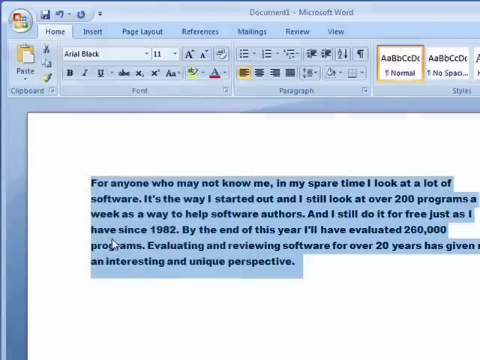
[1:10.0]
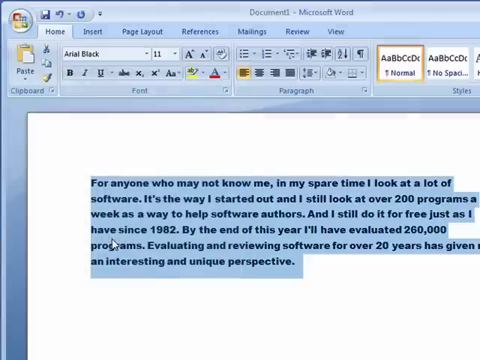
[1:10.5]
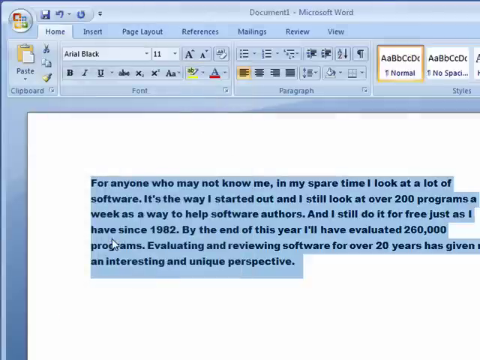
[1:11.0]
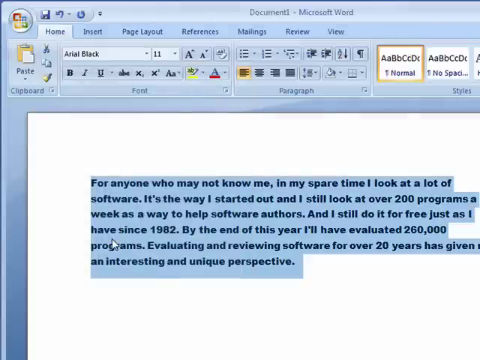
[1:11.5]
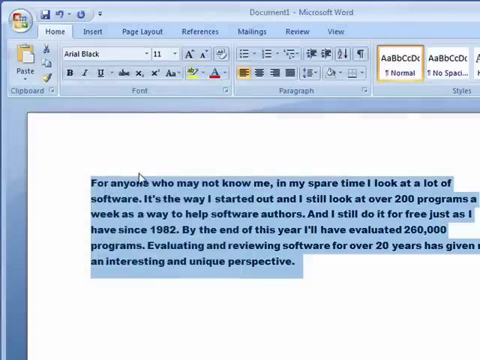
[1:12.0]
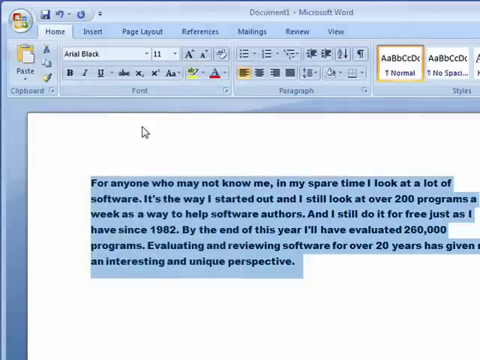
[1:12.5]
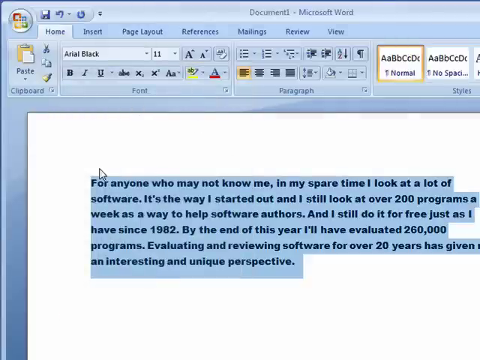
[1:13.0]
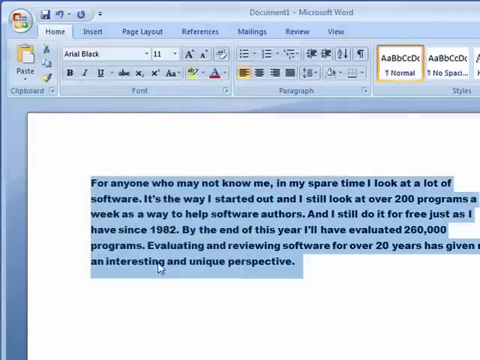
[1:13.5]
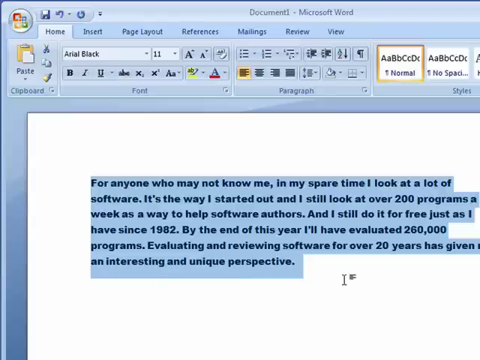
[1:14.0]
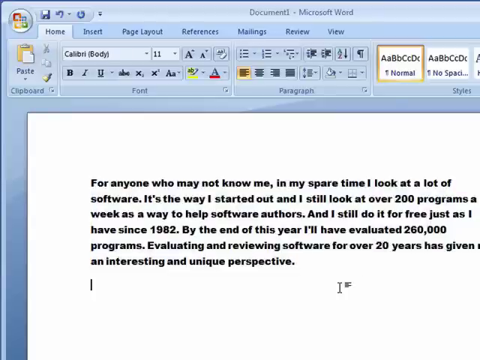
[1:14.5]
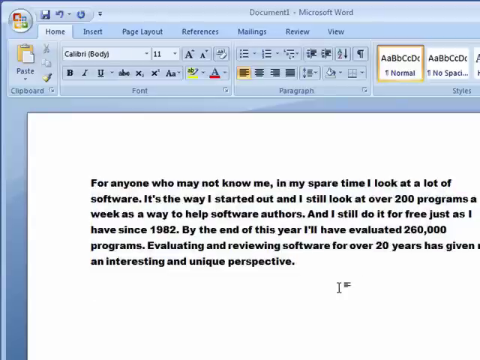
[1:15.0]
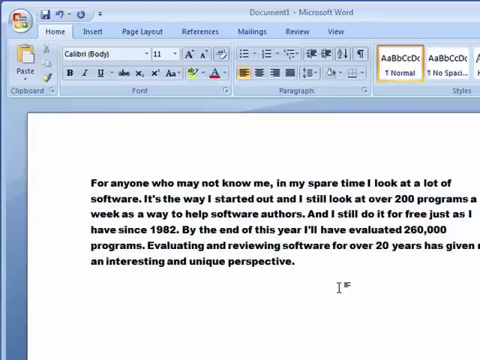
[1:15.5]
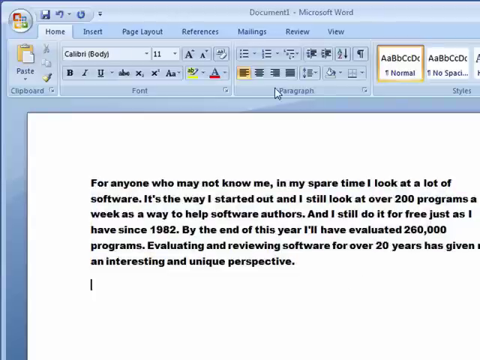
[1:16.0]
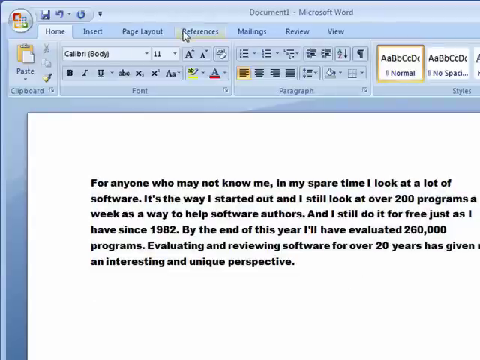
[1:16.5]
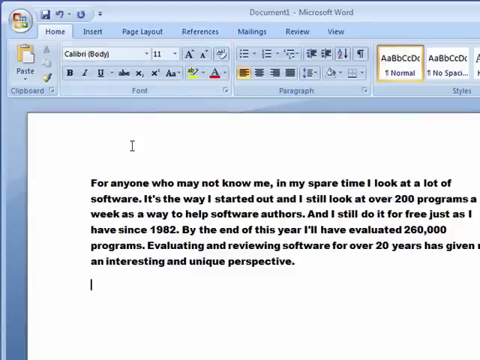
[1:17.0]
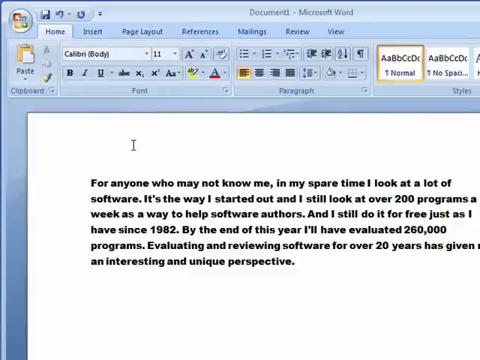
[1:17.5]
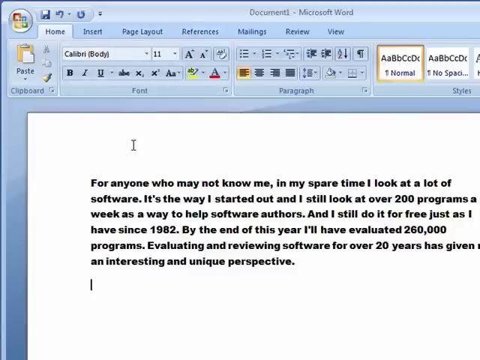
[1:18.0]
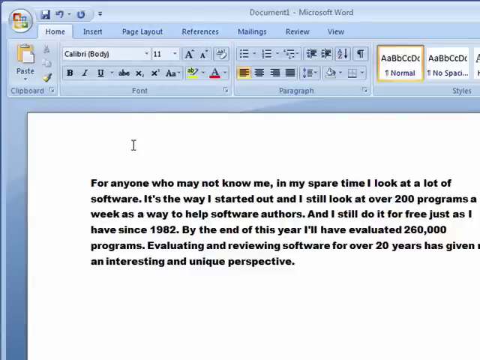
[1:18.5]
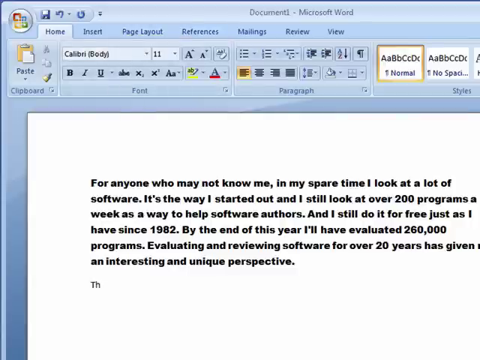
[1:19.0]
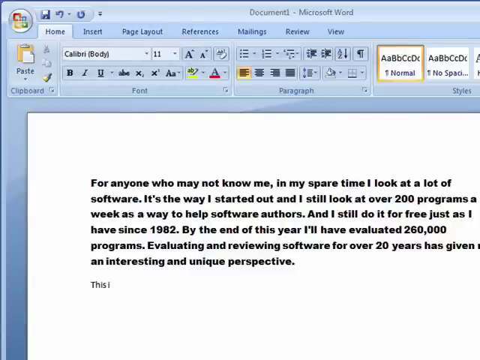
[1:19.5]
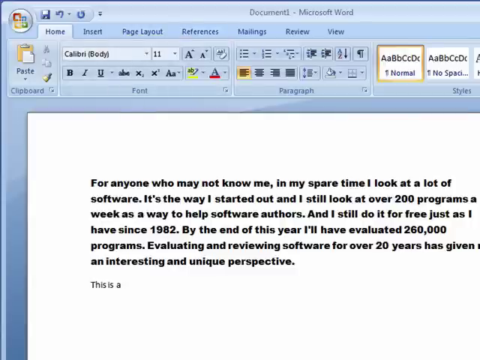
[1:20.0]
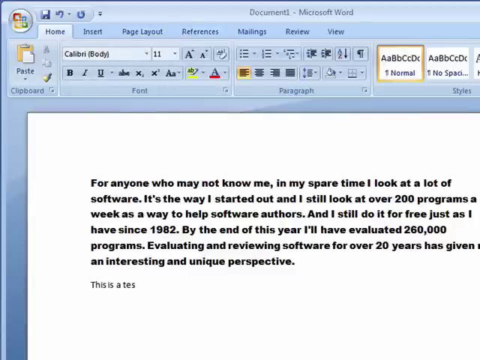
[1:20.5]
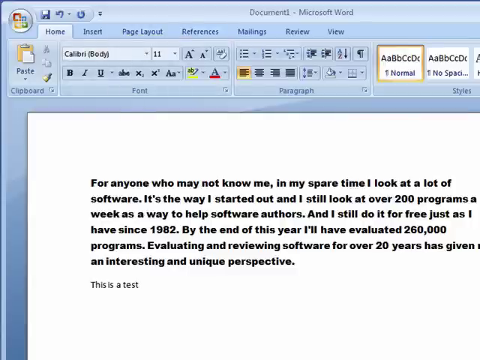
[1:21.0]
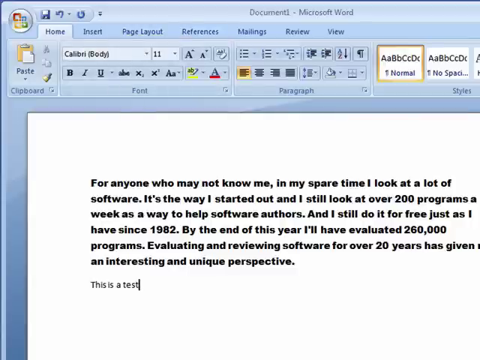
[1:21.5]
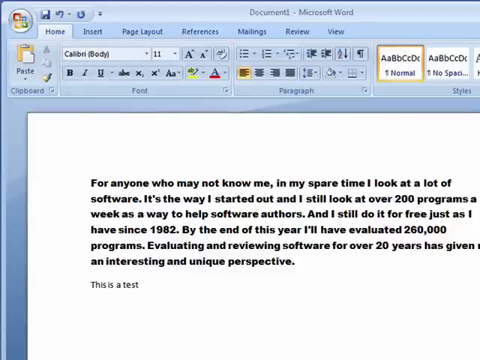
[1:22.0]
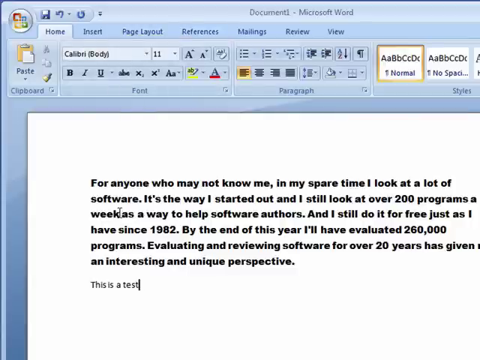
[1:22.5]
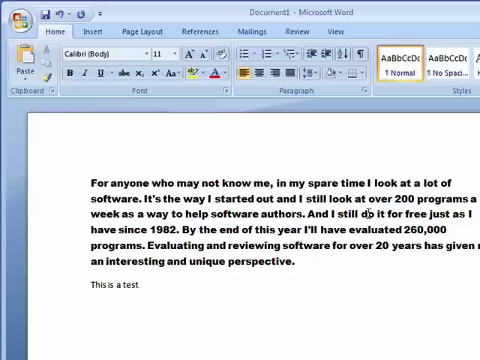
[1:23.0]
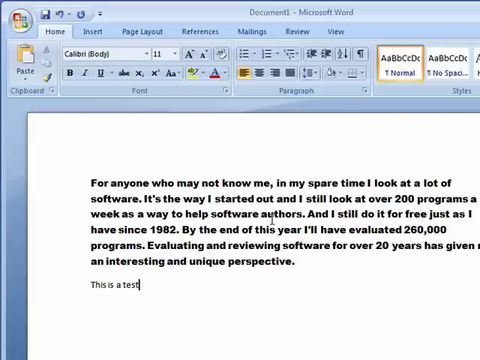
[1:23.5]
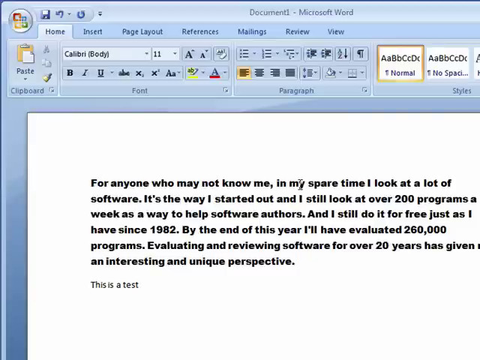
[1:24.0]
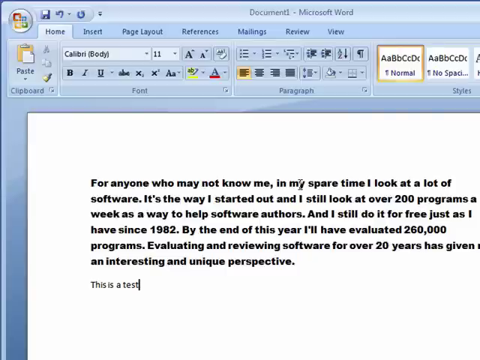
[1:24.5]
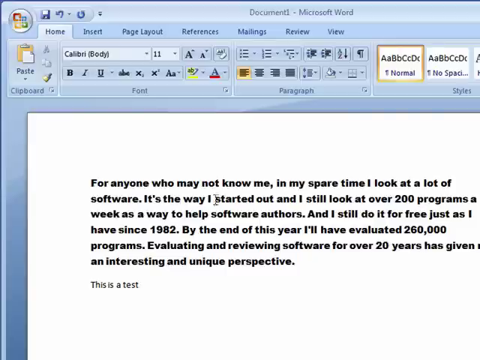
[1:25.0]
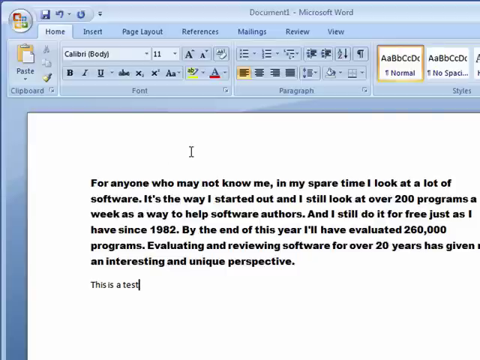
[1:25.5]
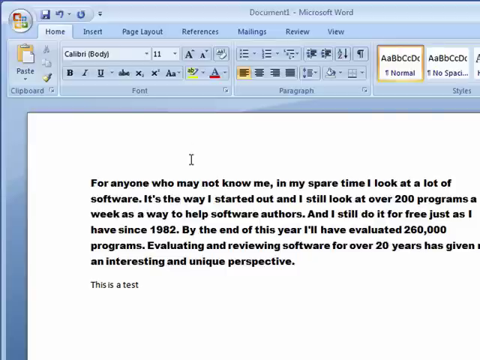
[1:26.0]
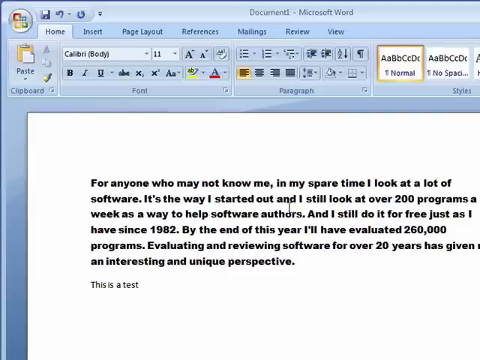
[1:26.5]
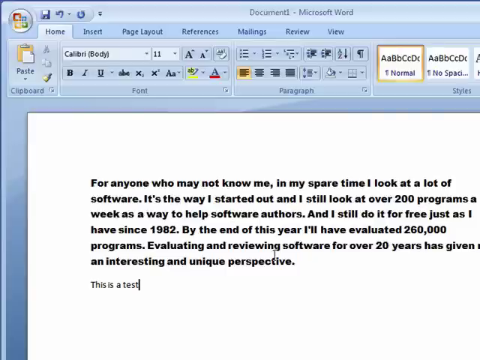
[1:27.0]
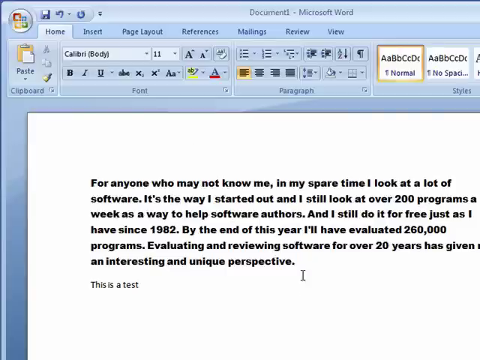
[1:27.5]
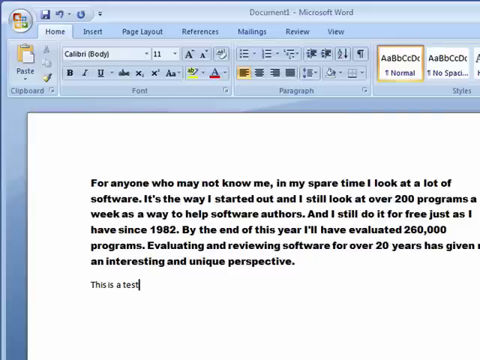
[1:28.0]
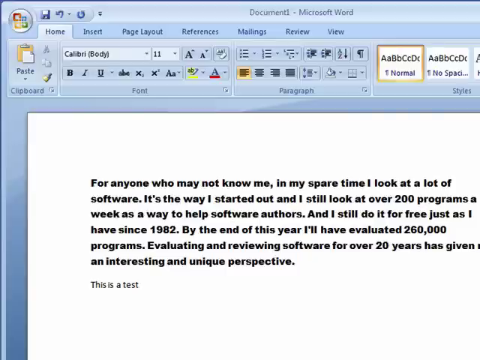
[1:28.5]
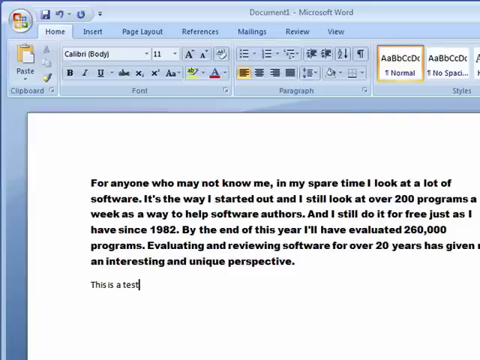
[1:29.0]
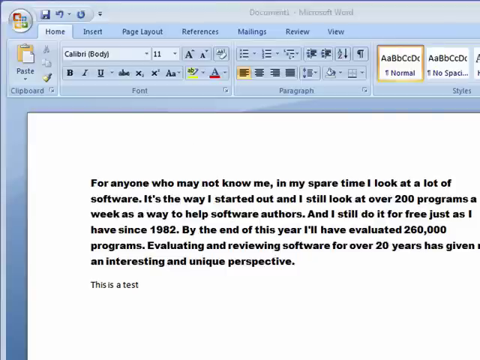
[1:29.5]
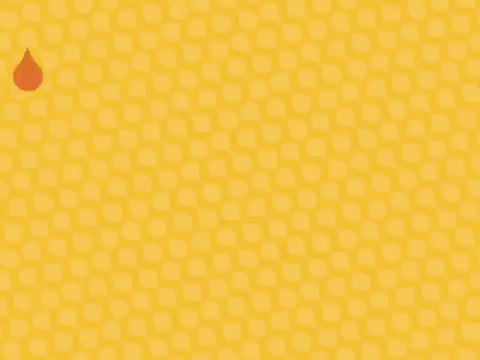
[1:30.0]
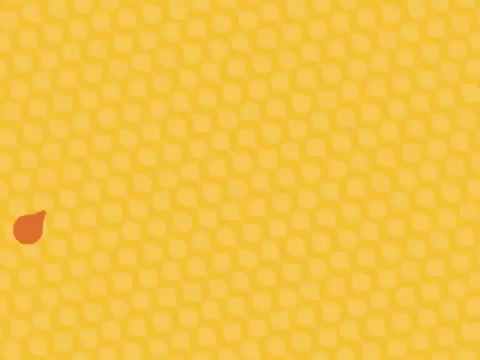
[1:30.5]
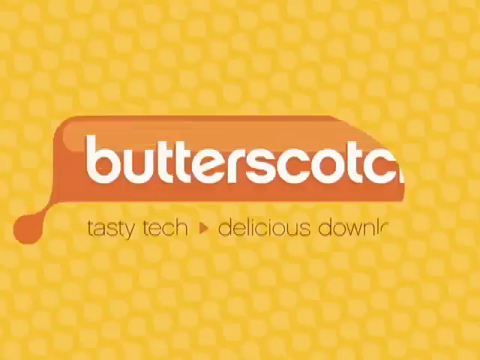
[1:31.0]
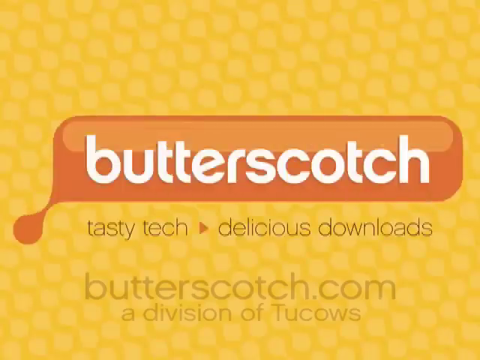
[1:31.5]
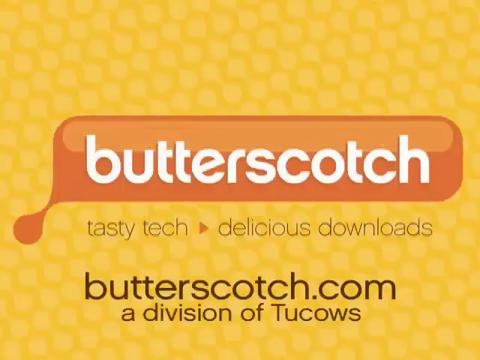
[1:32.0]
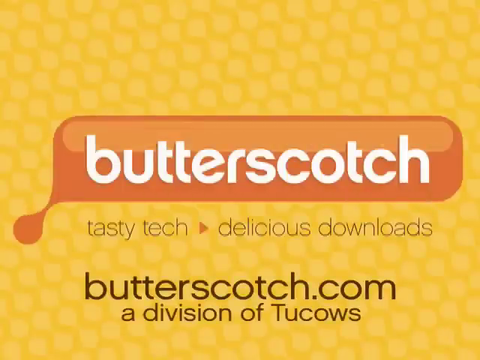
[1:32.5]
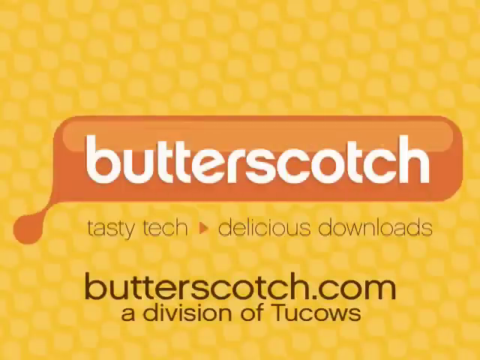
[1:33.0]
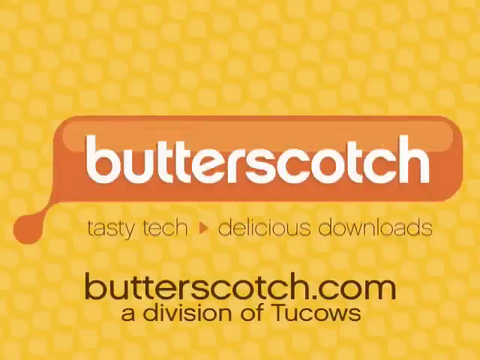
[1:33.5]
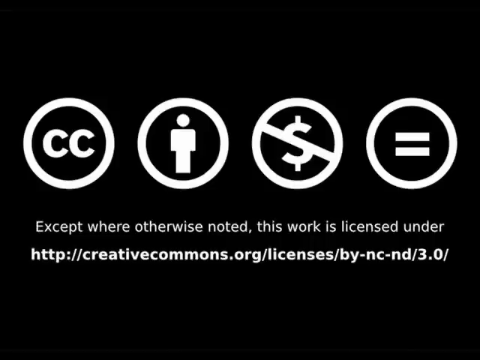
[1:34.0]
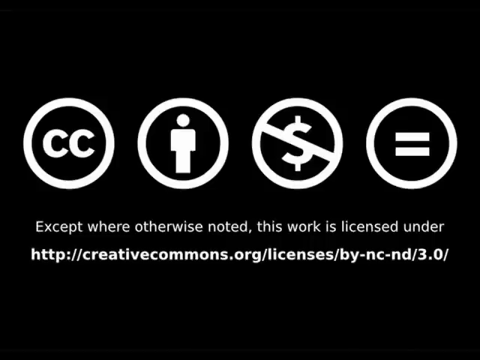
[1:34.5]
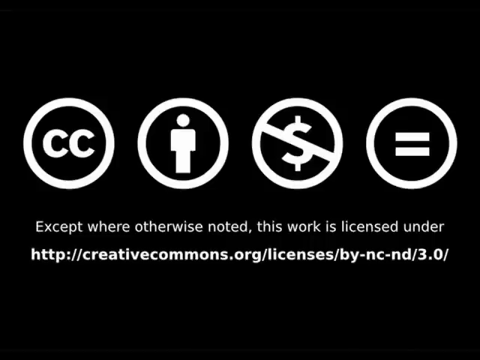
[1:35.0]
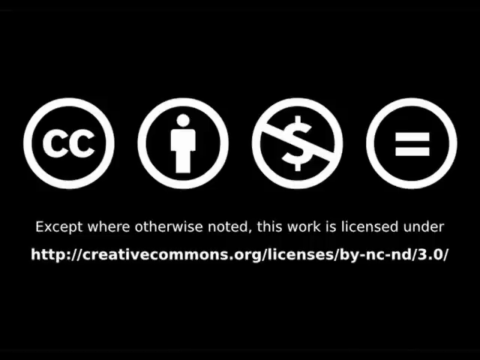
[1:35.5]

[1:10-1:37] The whole paragraph is highlighted, and the man continues focusing on font type and font size, using test text. At the end, some quick licensing information appears, apparently related to Butterscotch and downloads.